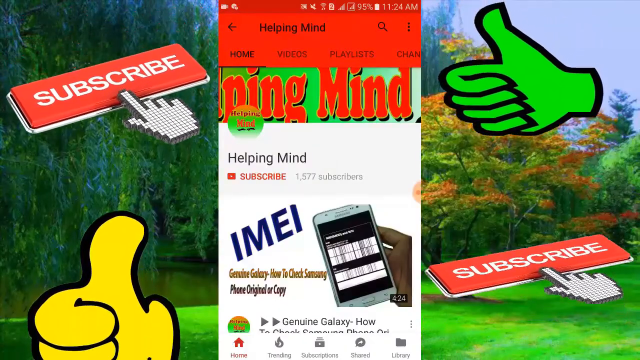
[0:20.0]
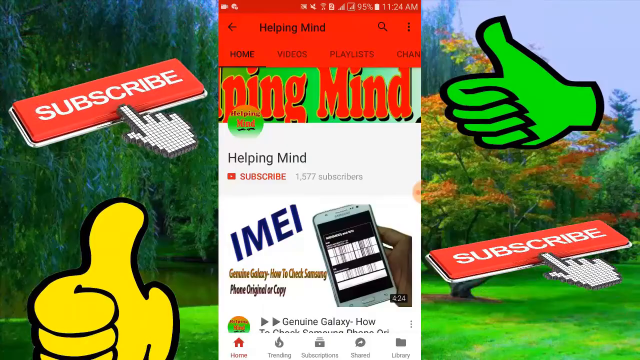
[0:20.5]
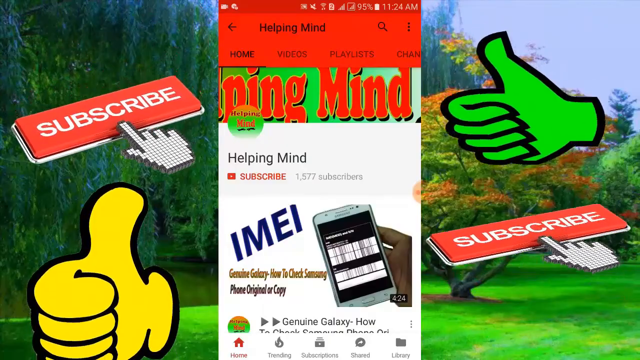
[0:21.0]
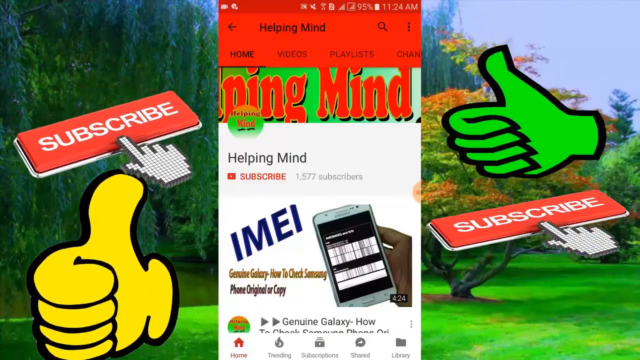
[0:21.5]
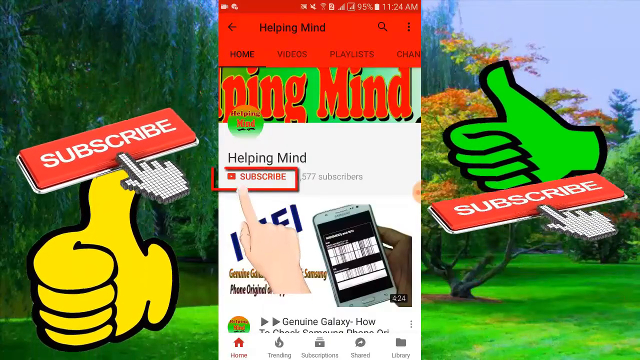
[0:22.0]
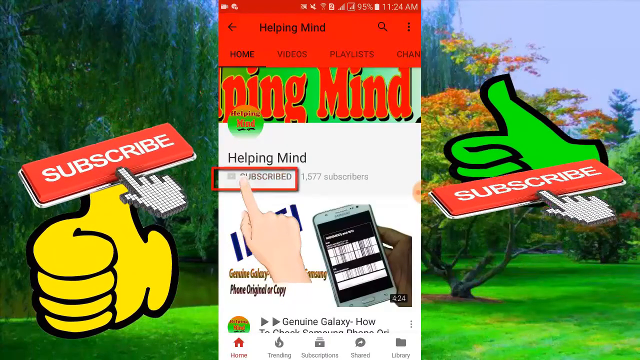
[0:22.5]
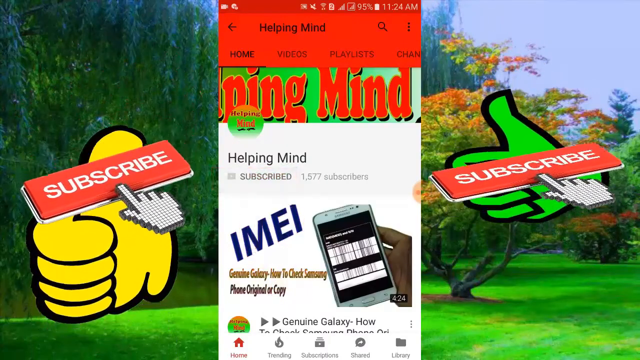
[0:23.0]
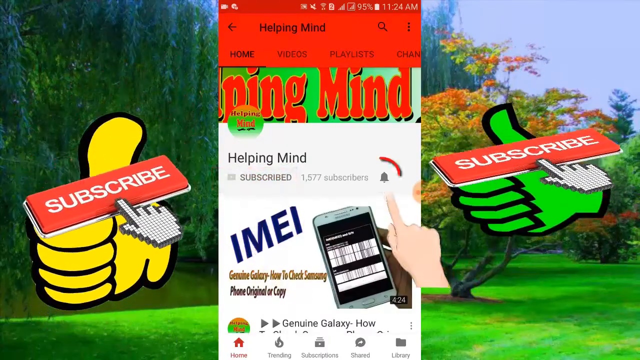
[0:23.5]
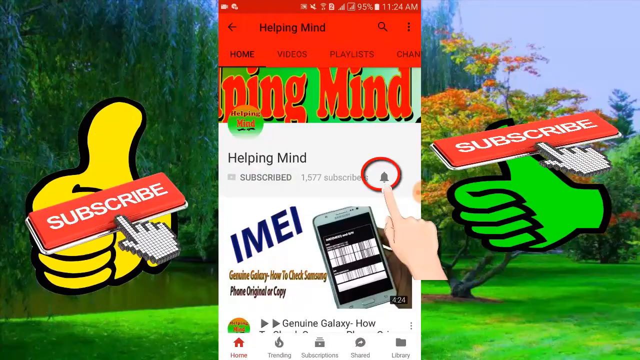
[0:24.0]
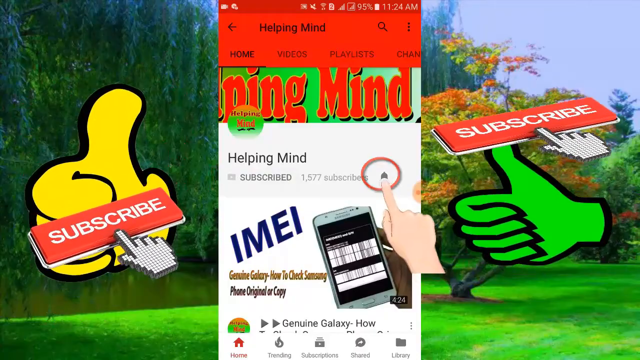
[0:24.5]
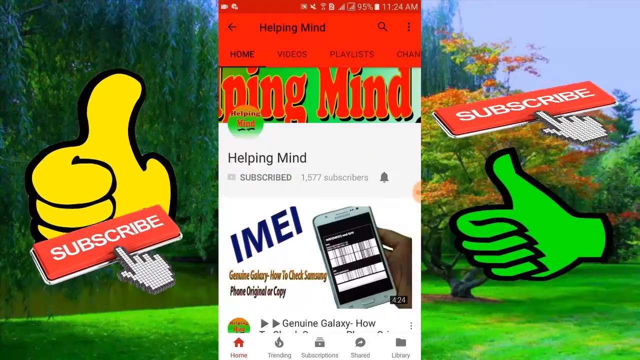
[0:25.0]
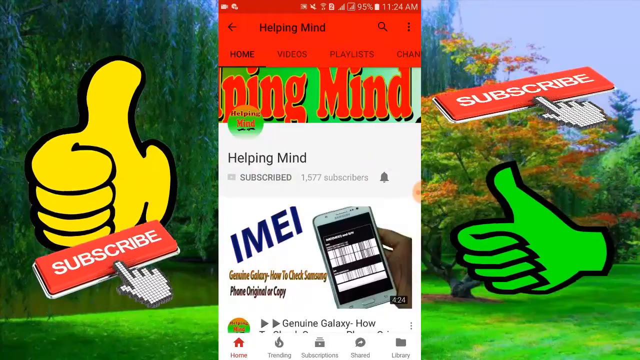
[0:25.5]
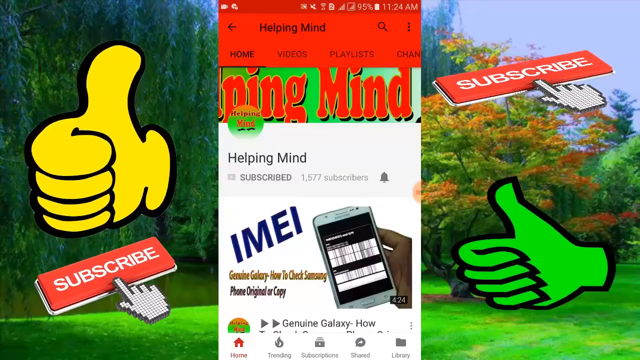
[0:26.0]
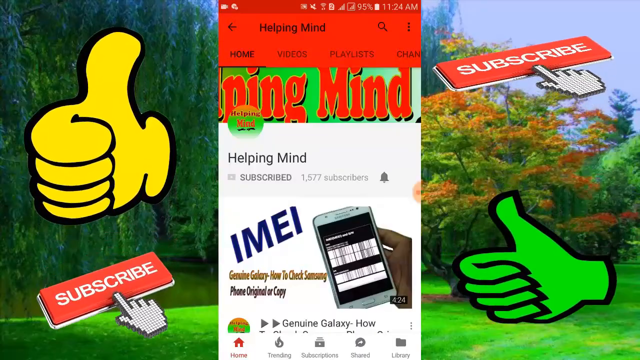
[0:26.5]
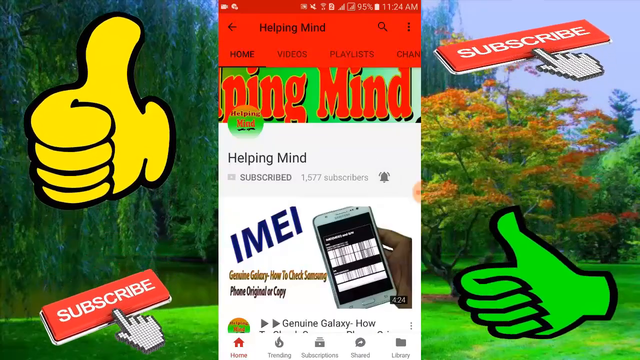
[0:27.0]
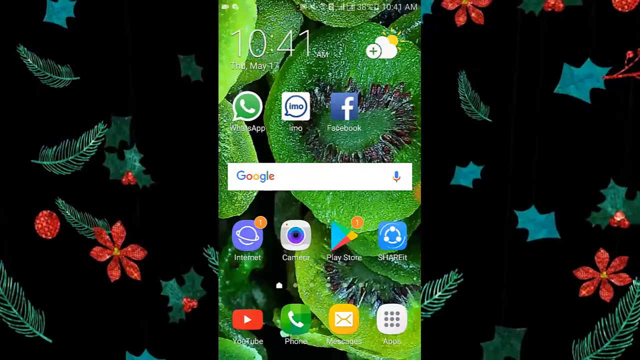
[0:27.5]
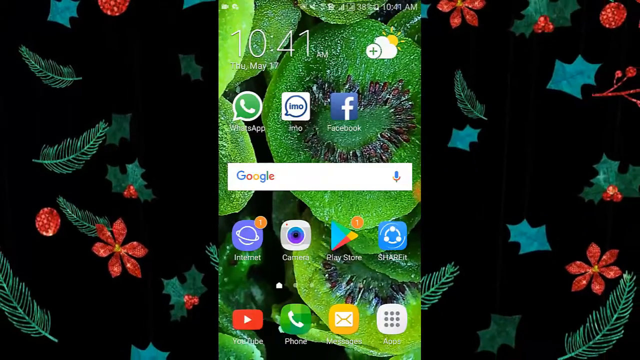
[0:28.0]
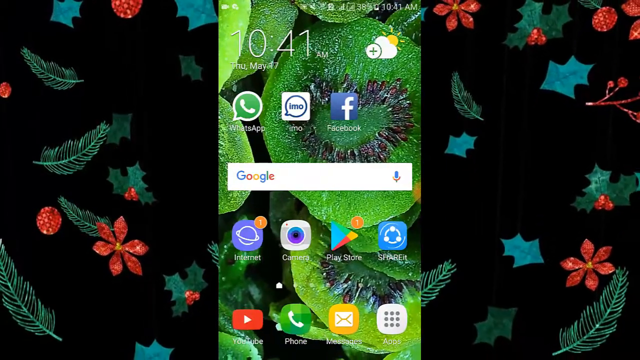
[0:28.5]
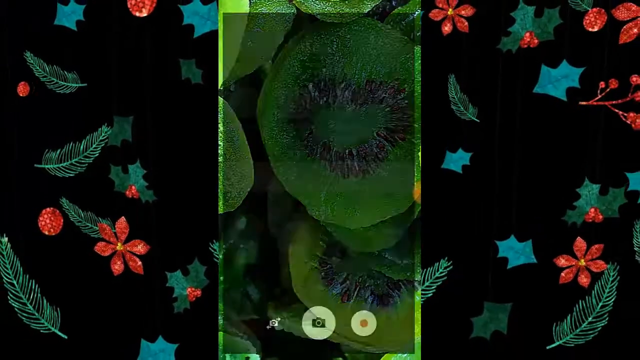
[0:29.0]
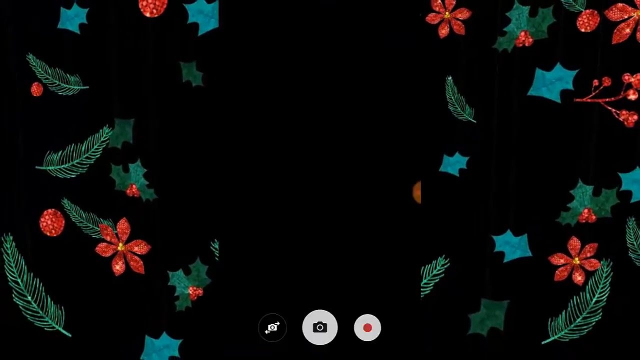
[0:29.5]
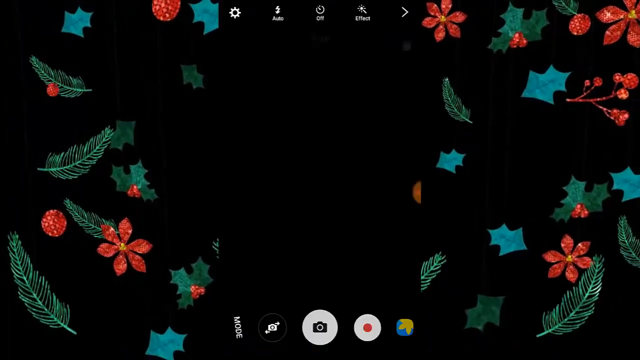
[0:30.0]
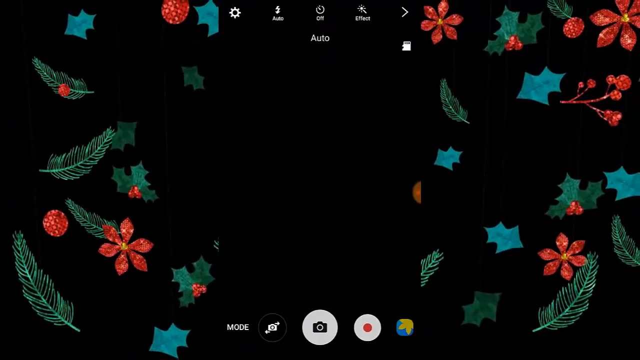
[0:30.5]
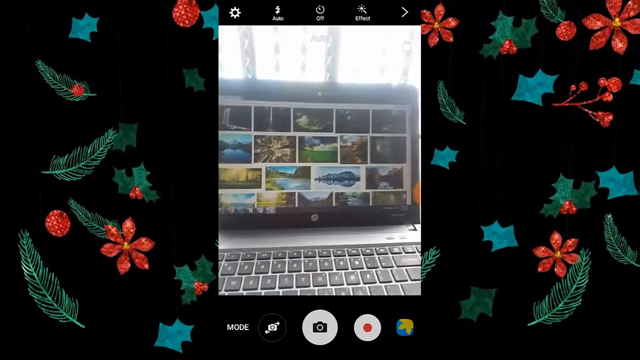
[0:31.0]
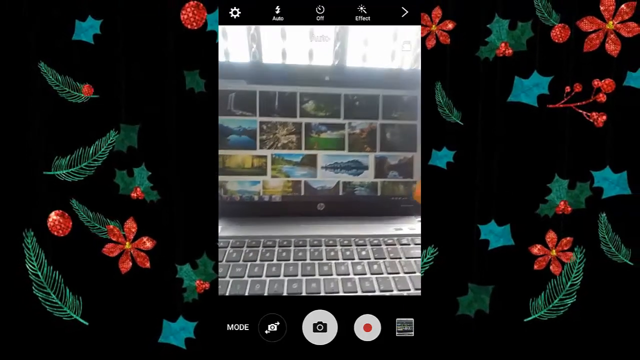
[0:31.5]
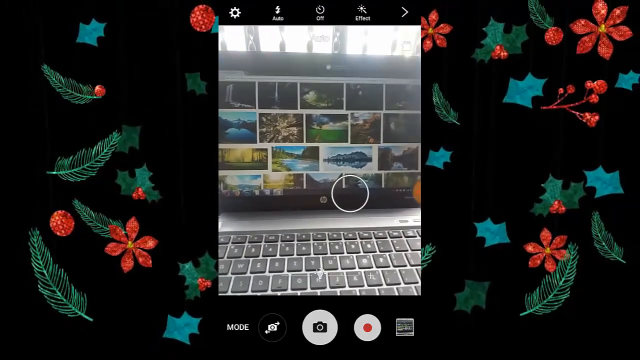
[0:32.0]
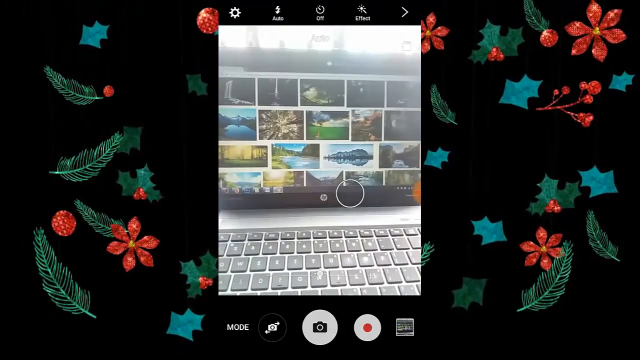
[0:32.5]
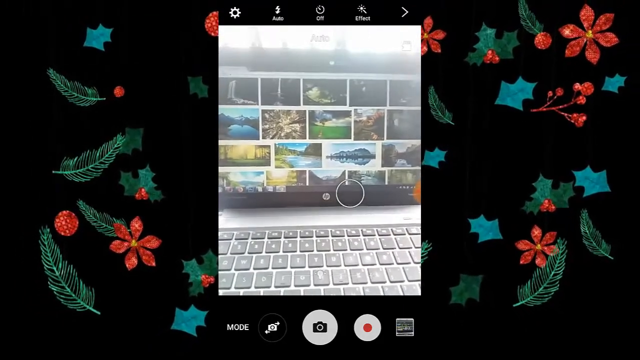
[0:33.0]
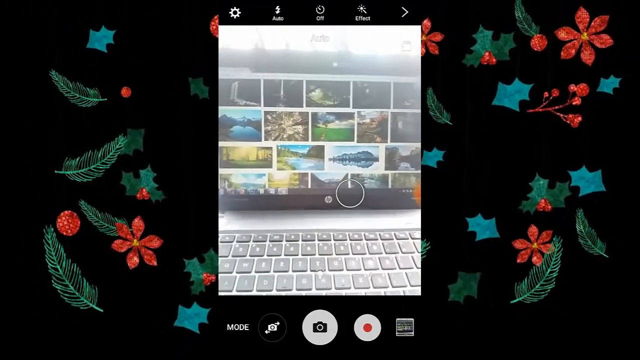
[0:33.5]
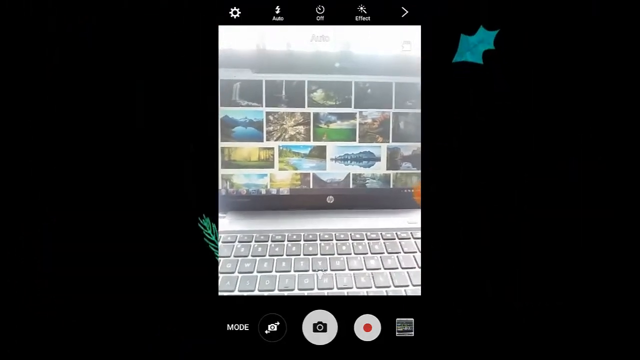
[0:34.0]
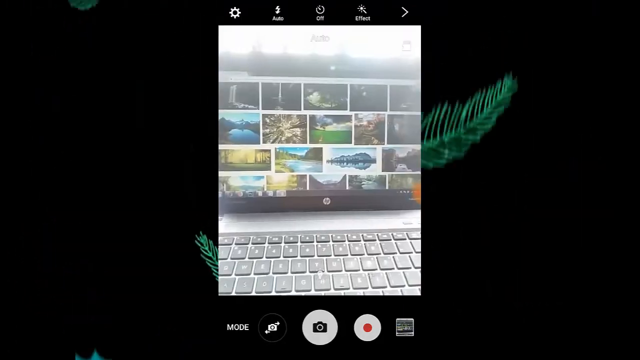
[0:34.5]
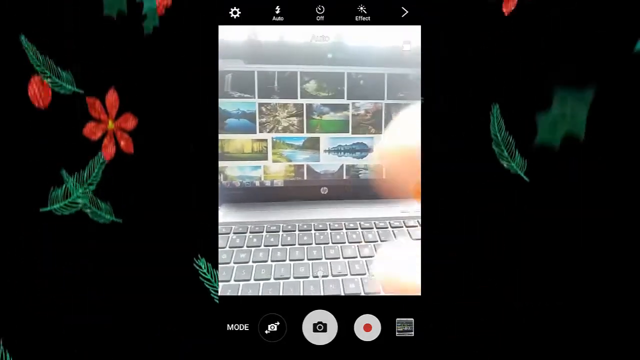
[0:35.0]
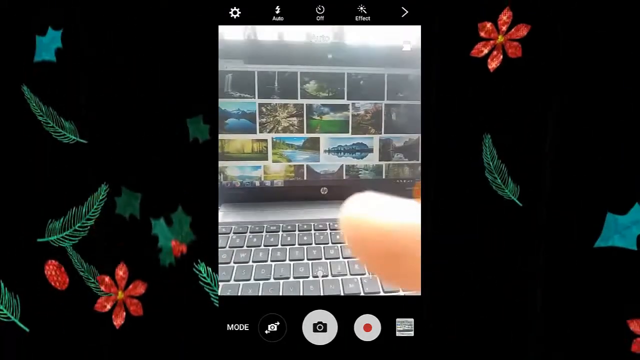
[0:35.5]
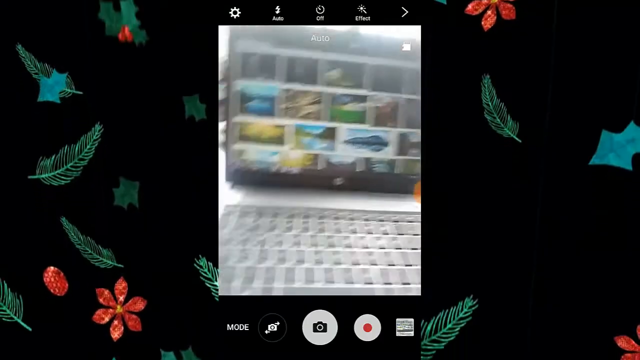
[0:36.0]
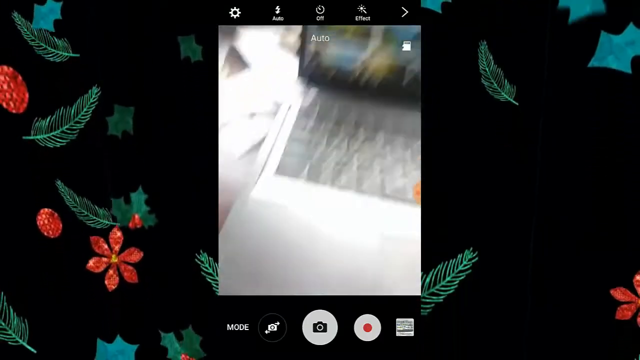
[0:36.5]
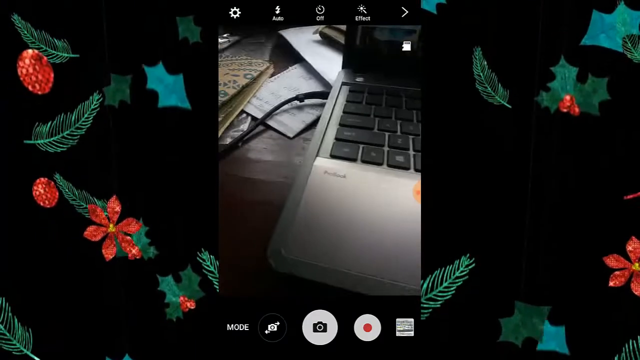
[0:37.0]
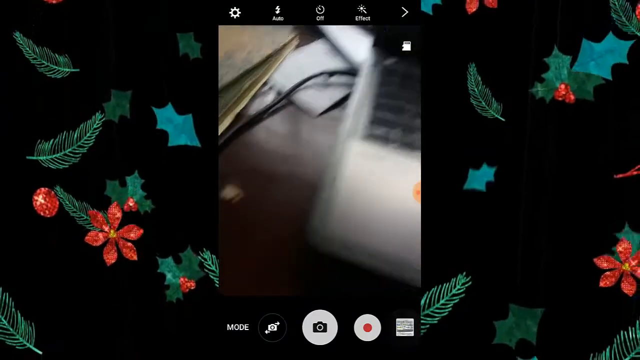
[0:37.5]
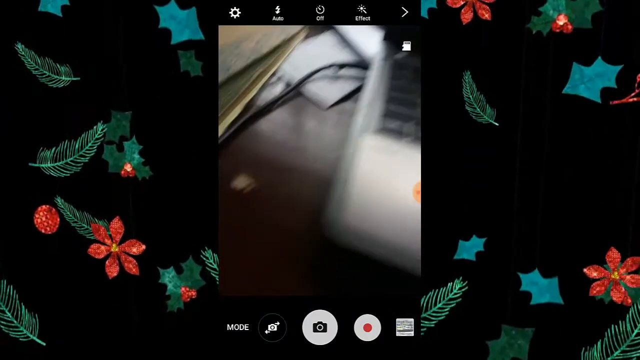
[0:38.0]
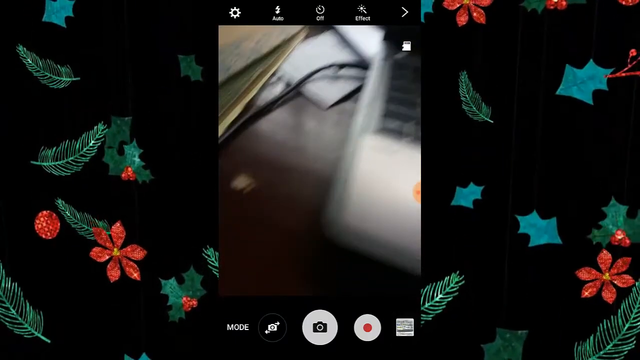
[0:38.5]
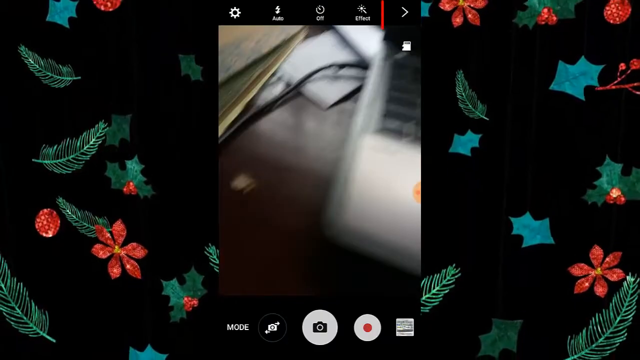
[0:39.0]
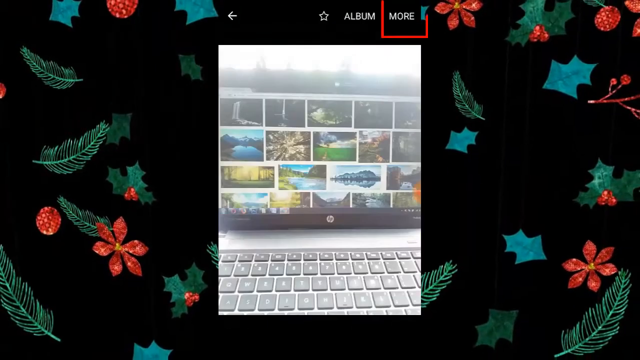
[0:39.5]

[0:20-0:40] A window titled "Helping Hand" appears in a screencast of a vertically oriented smartphone. On the sides of the screencast is a background of a realistic forest with green grass, tall trees, and blue sky. Outside the phone screencast appear two thumbs up images, one green and one yellow, as well as two red buttons labeled "Subscribe" being clicked on by a cursor. The window has the abbreviation "IMEI" on it, a picture of two smartphones next to each other, and reads "Galaxy, How to Check Summary, Phone Original or Copy". The user clicks the subscribe button on the Helping Hand page, which has 1,577 subscribers, then clicks the bell for notifications. The video cuts to the phone's home screen, whose background is a bunch of lily pads in the water. The time is 10:41 AM, and there are several icons on the home screen: WhatsApp, IMO, Facebook, Internet, Camera, Play Store, and Share It. The user opens the camera and looks through it at a laptop computer displaying Google Image Search with various naturalistic settings. The user briefly puts a finger in front of the camera, then moves the camera to face down toward the base of the laptop.